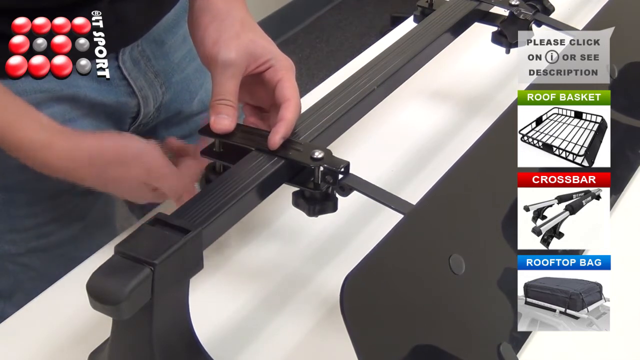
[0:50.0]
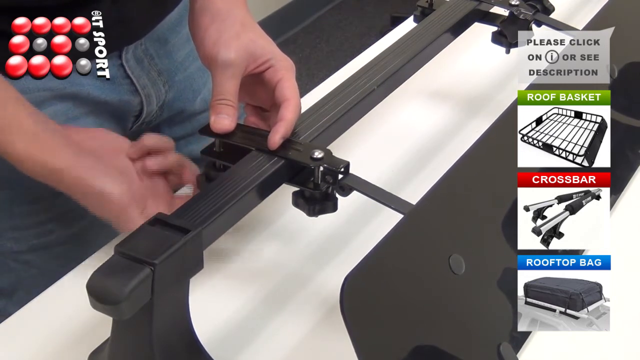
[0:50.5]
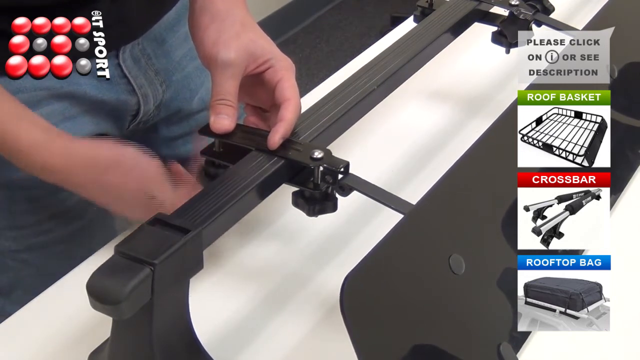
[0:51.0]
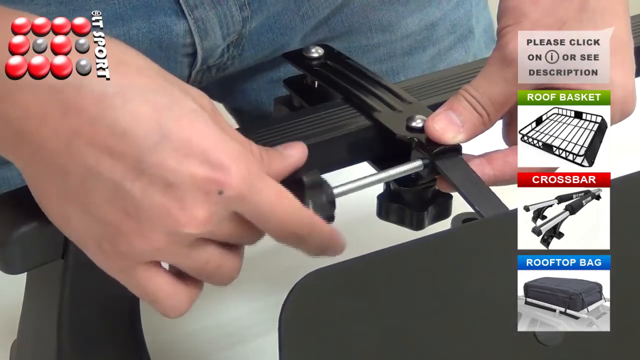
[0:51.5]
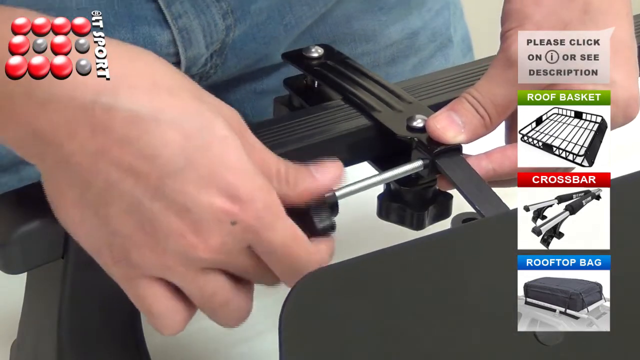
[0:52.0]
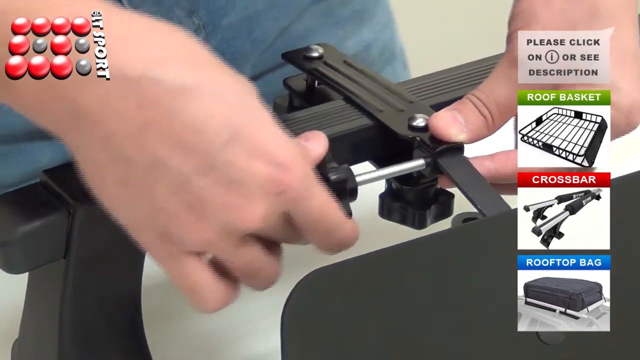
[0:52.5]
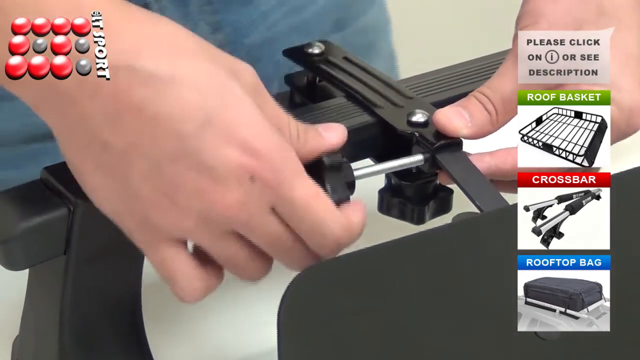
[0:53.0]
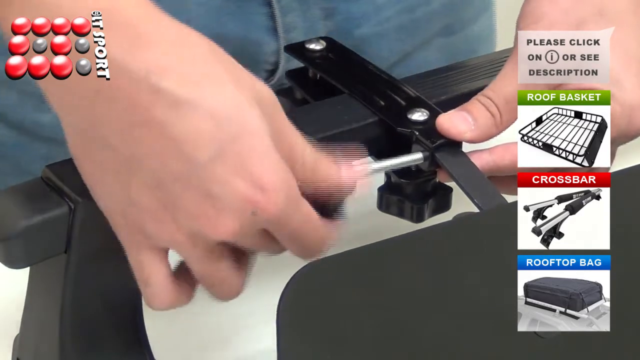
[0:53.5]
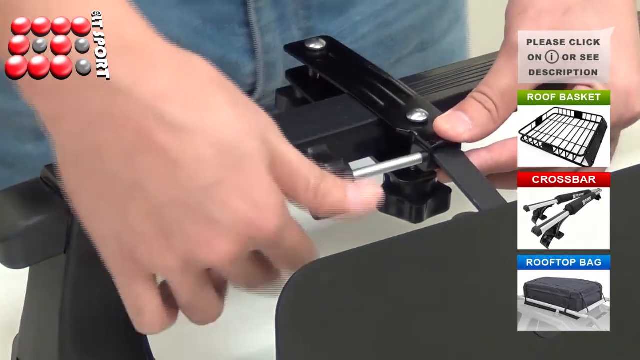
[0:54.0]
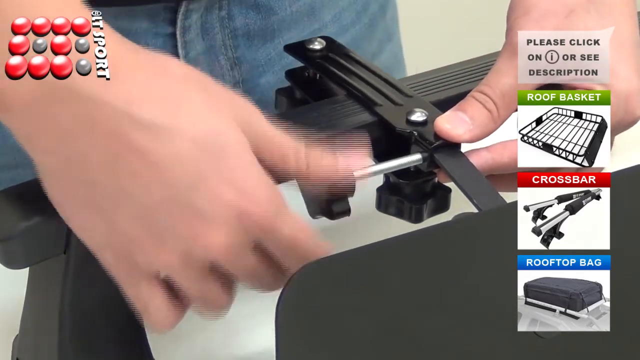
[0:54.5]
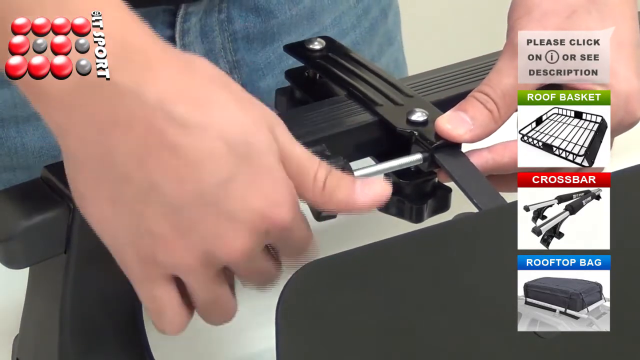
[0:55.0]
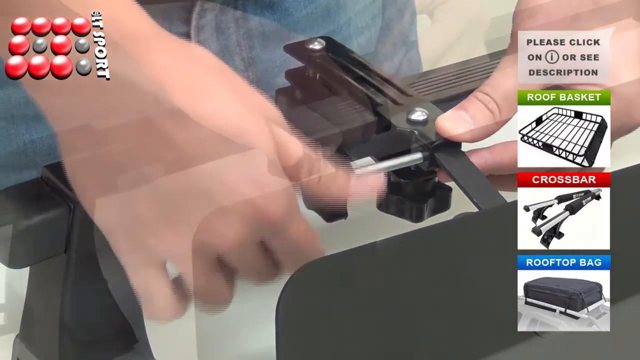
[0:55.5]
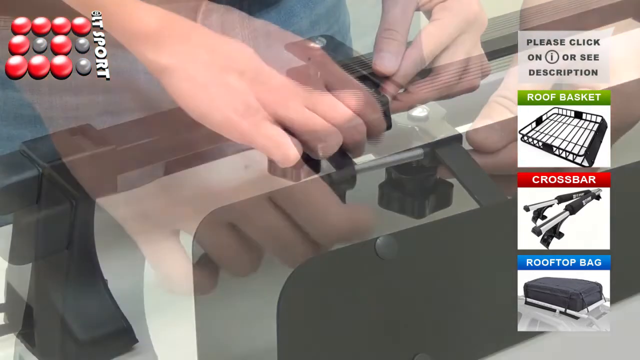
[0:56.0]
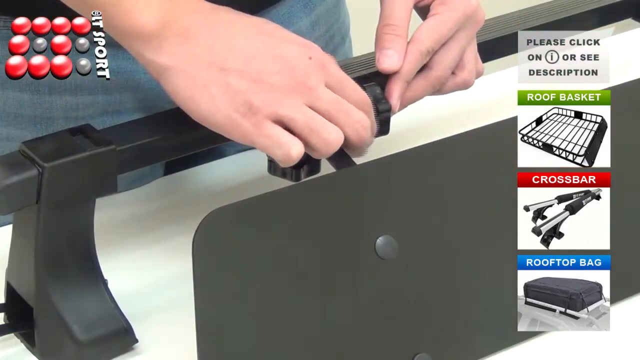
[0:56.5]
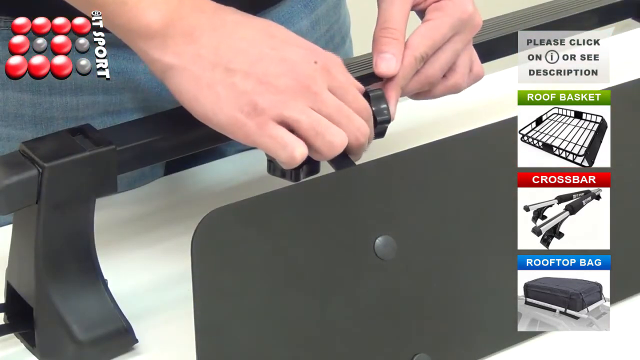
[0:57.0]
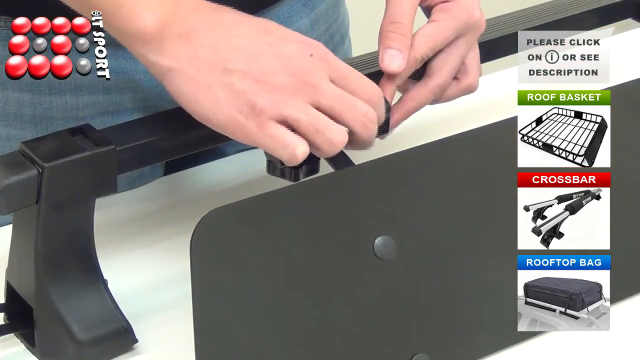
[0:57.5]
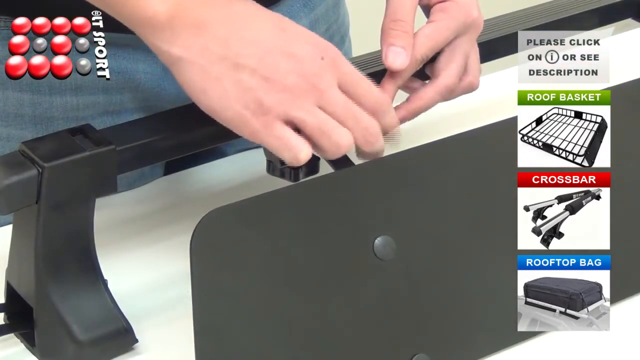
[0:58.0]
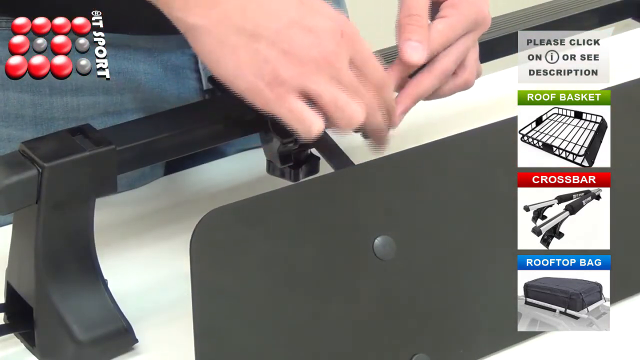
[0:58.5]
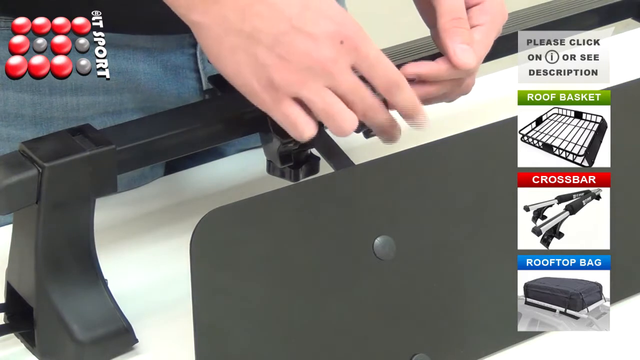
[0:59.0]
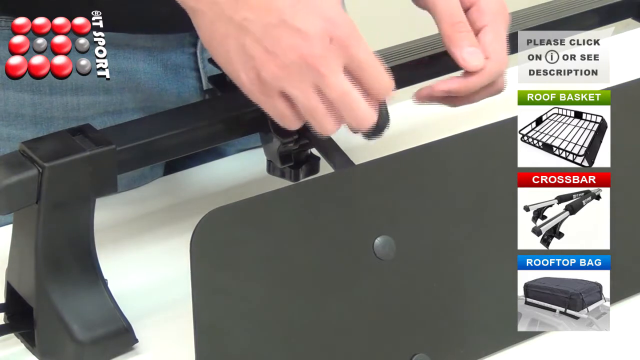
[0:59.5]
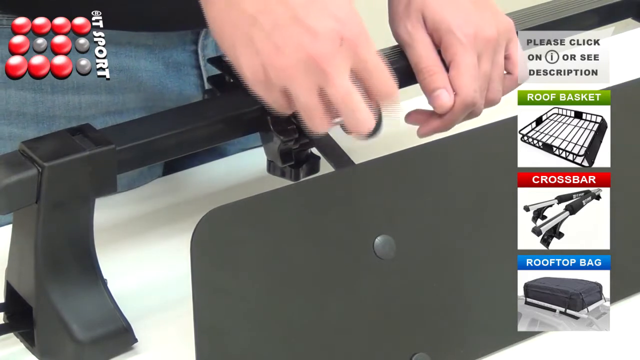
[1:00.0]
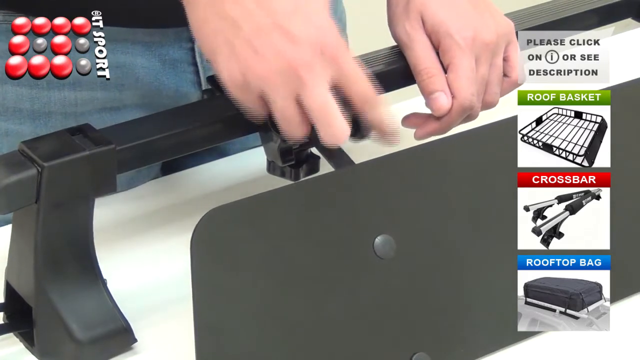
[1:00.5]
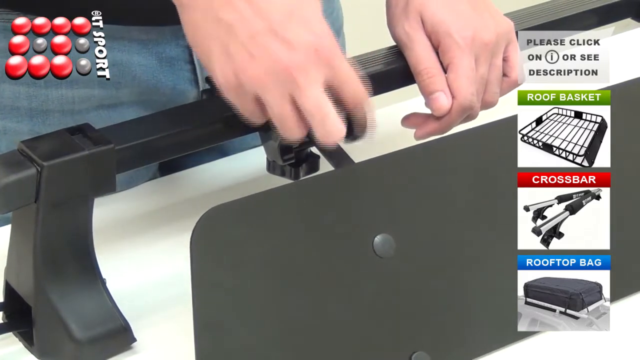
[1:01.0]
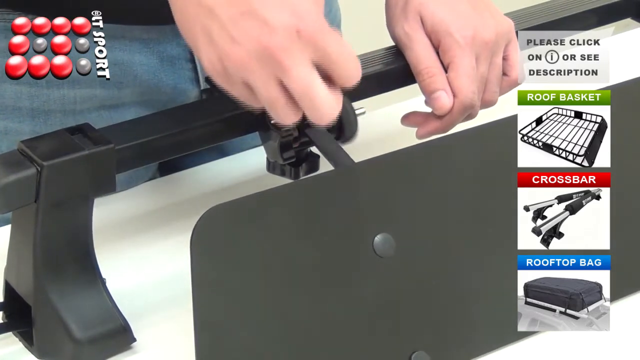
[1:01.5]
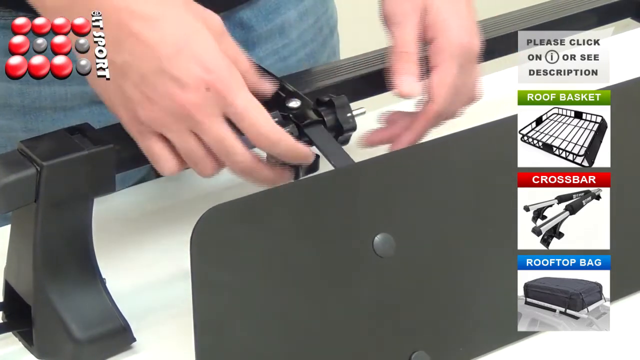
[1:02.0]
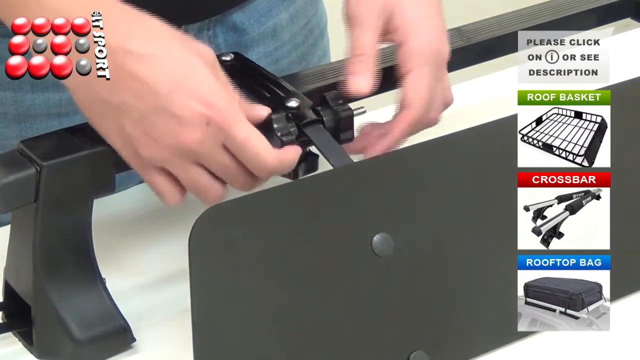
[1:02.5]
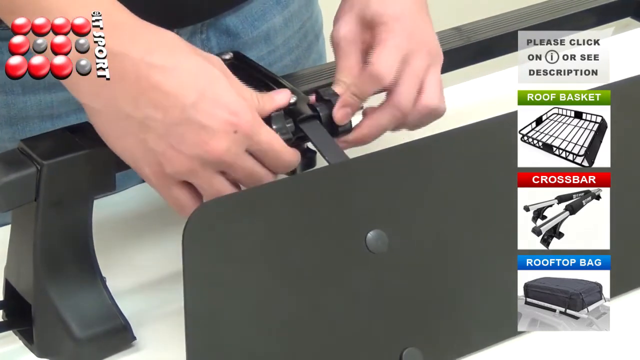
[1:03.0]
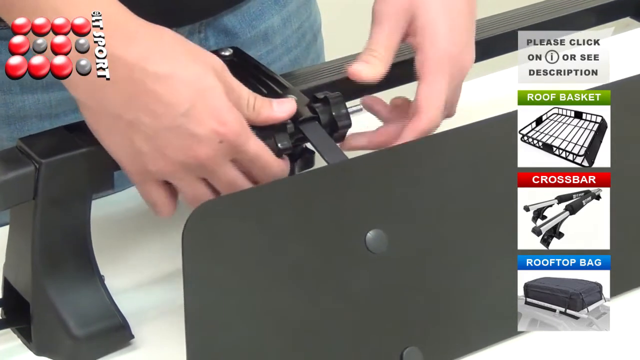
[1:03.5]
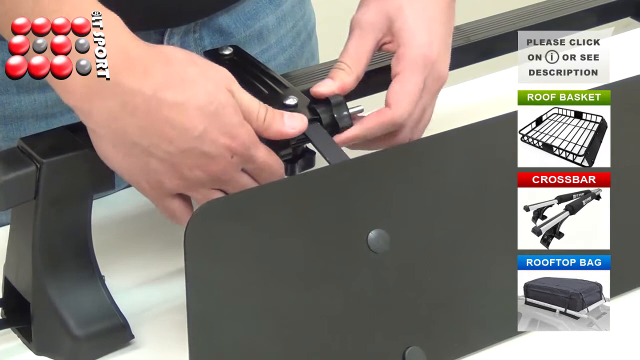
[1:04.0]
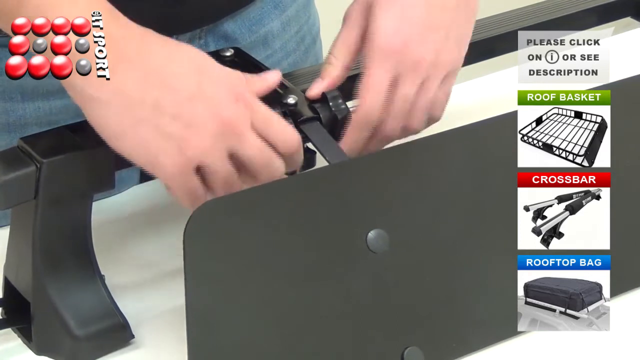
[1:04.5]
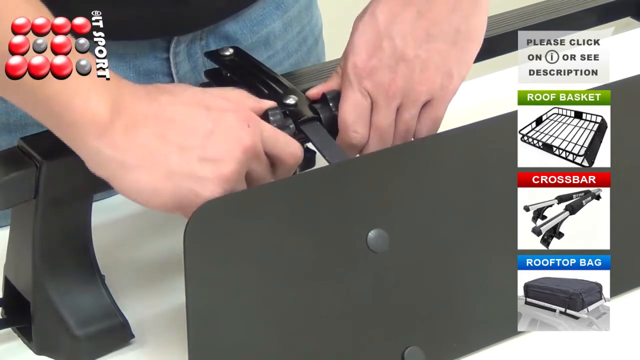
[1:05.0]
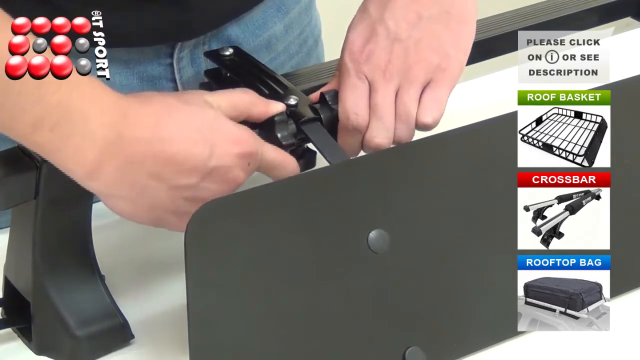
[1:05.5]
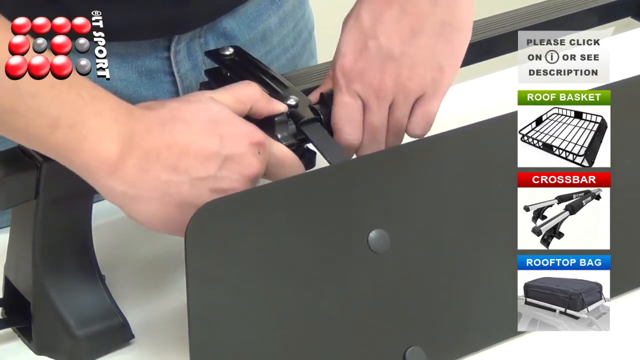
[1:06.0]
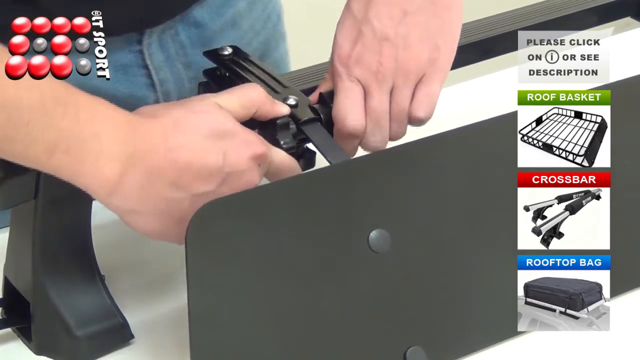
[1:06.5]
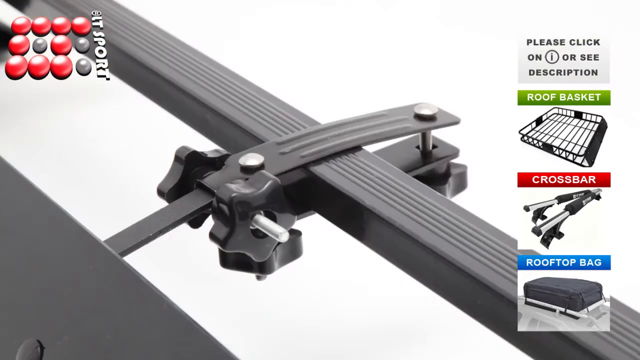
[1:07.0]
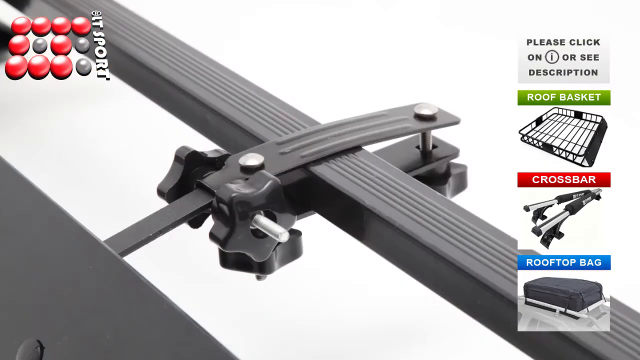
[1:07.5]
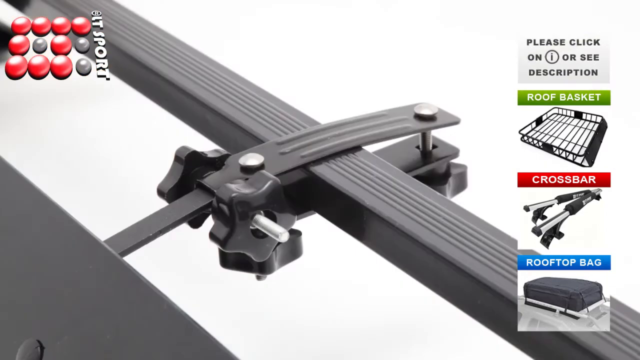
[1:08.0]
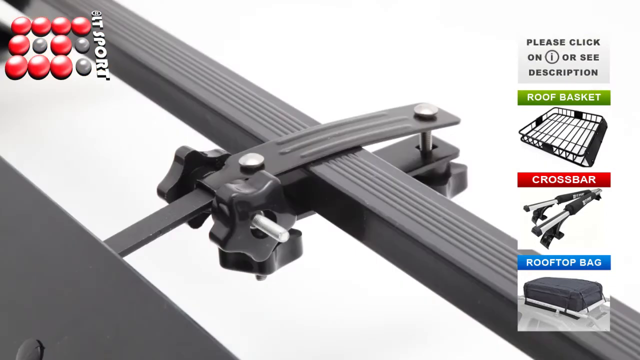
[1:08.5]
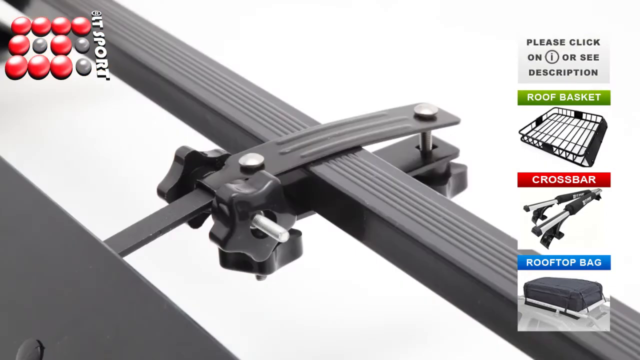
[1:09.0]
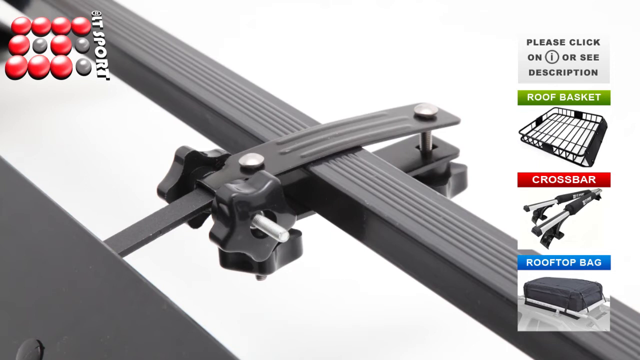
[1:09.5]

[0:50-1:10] The young man continues adjusting the black knobs, which have quite long silver screws. There is no text on the screen describing what he is doing. Screws still poke out after the knobs are tightened.